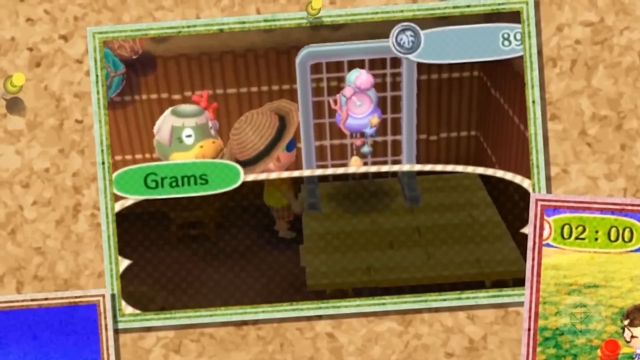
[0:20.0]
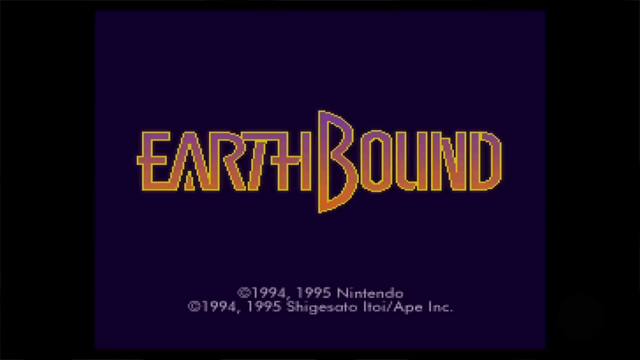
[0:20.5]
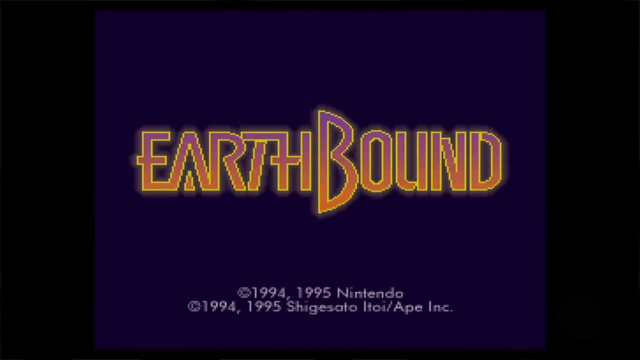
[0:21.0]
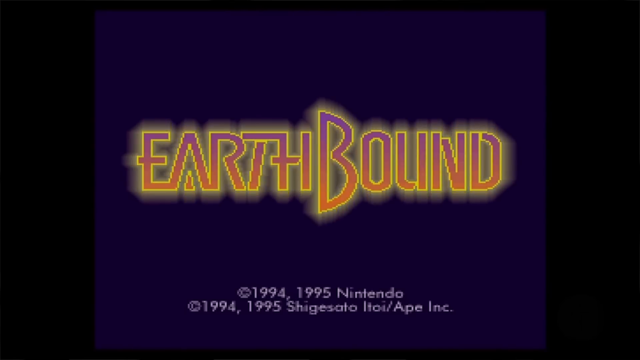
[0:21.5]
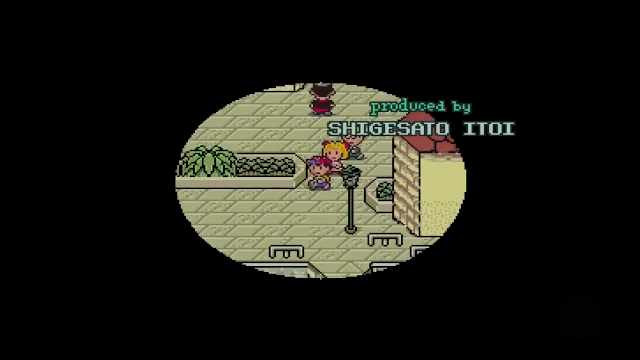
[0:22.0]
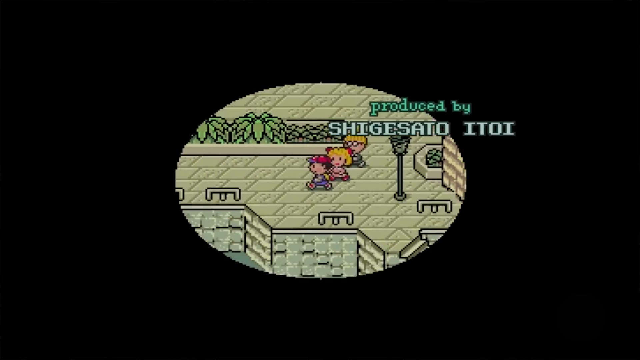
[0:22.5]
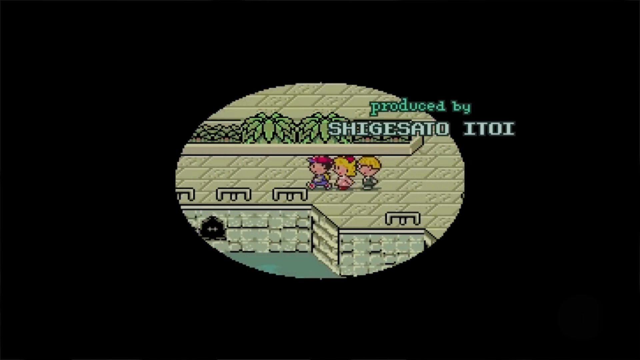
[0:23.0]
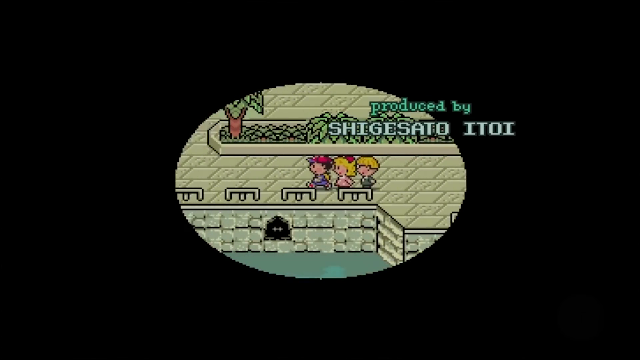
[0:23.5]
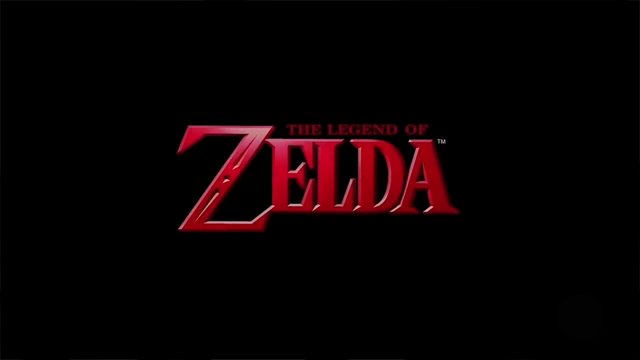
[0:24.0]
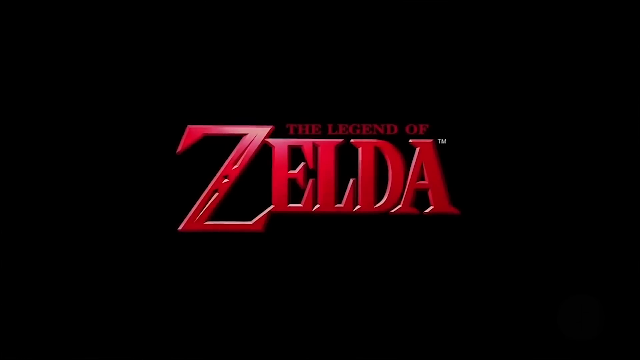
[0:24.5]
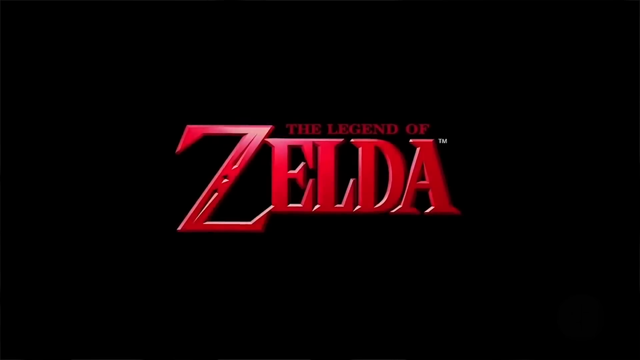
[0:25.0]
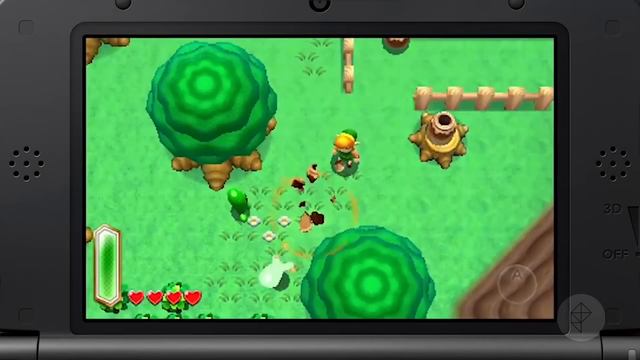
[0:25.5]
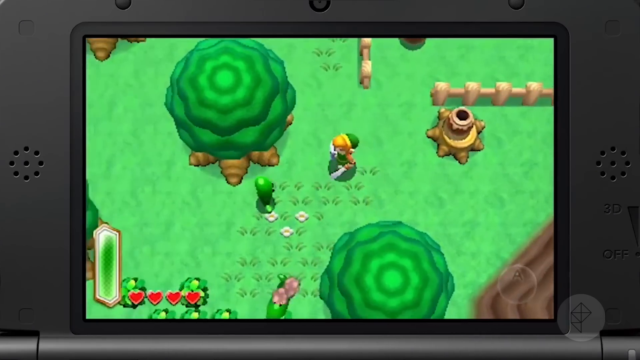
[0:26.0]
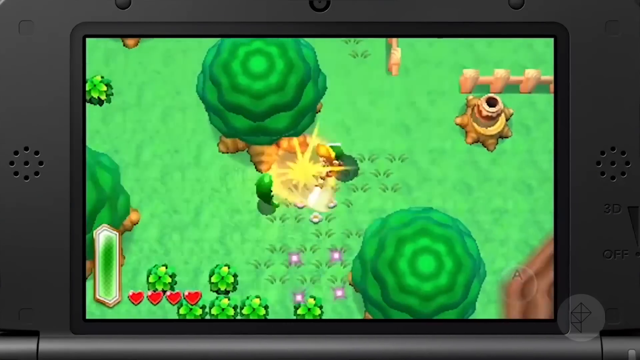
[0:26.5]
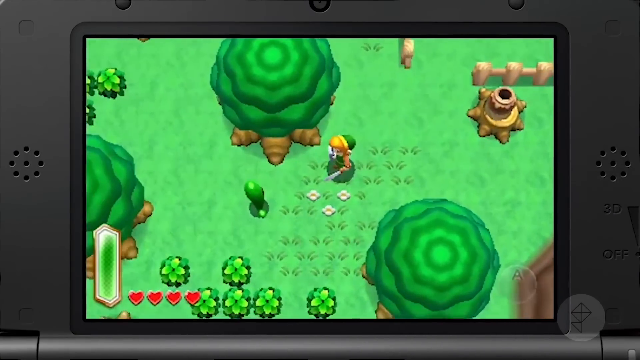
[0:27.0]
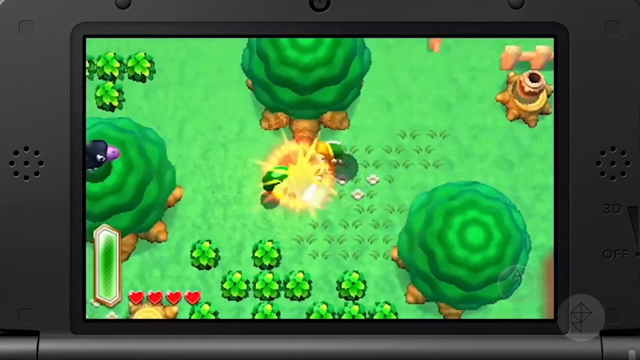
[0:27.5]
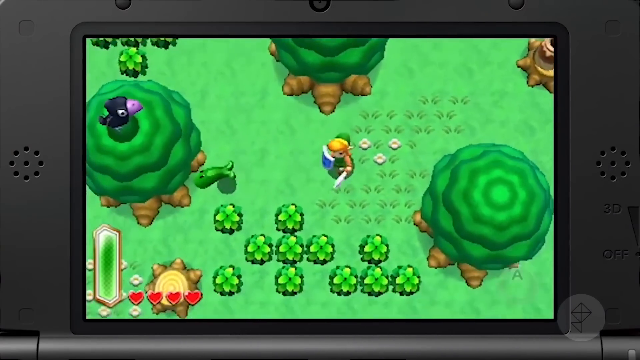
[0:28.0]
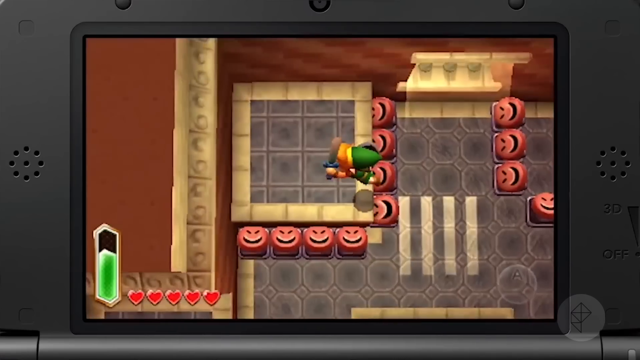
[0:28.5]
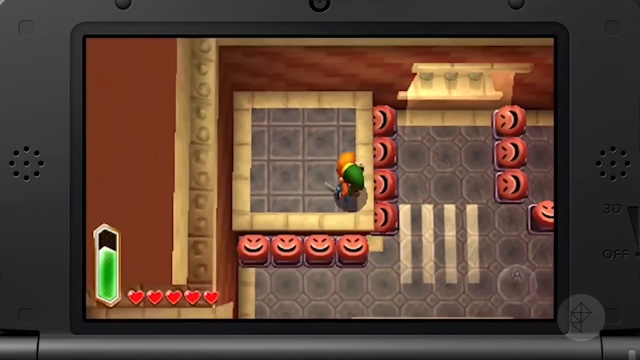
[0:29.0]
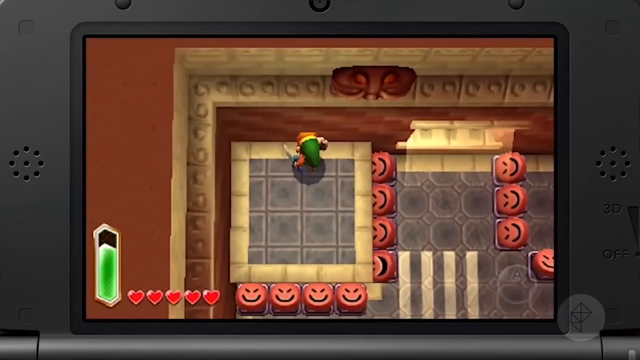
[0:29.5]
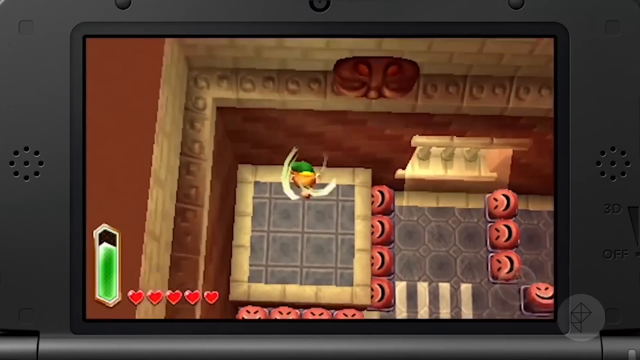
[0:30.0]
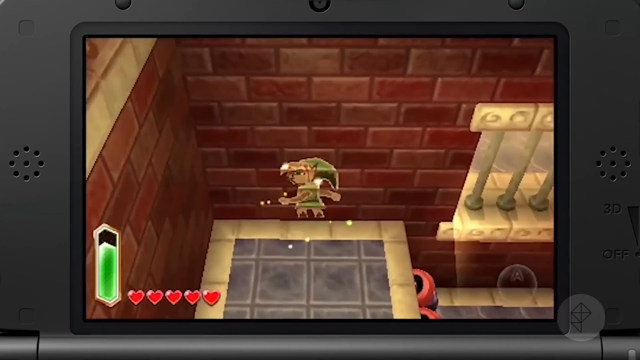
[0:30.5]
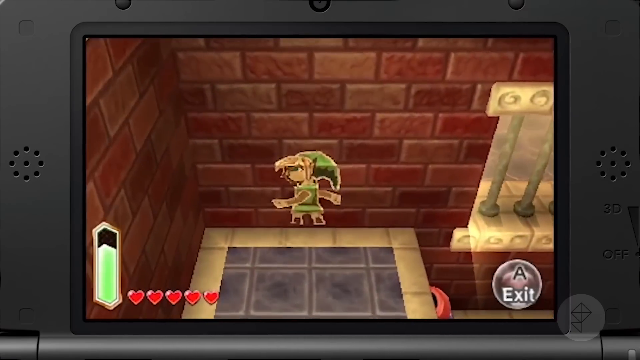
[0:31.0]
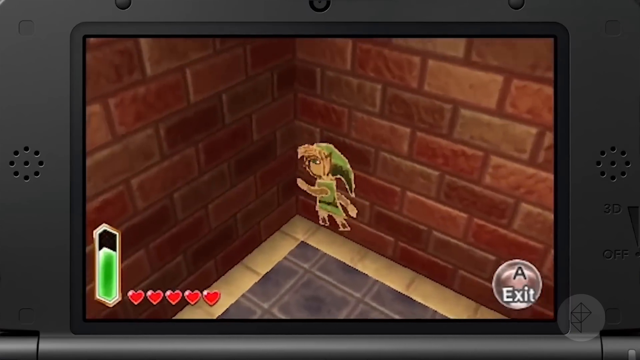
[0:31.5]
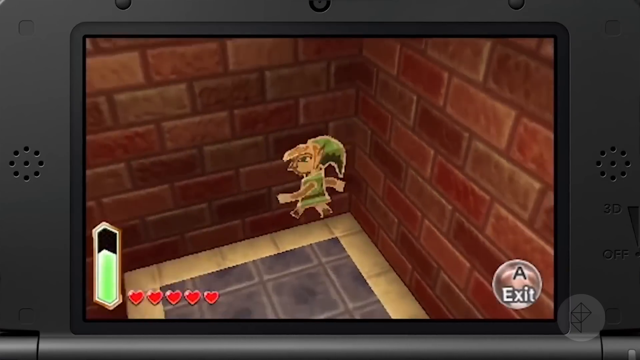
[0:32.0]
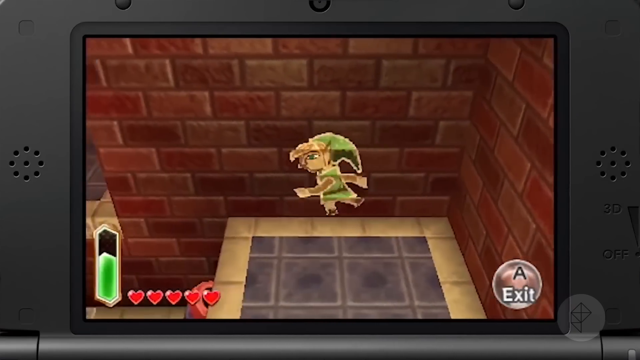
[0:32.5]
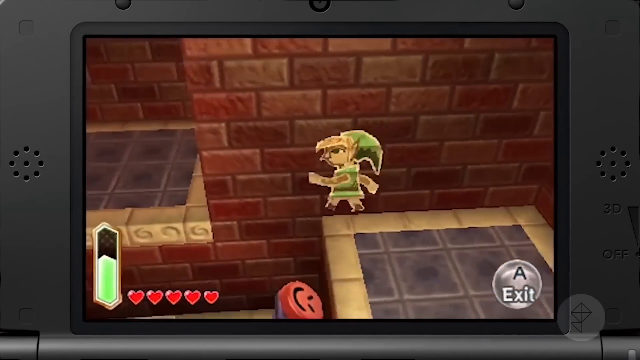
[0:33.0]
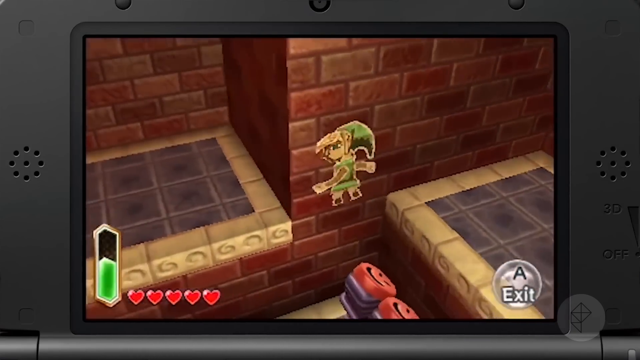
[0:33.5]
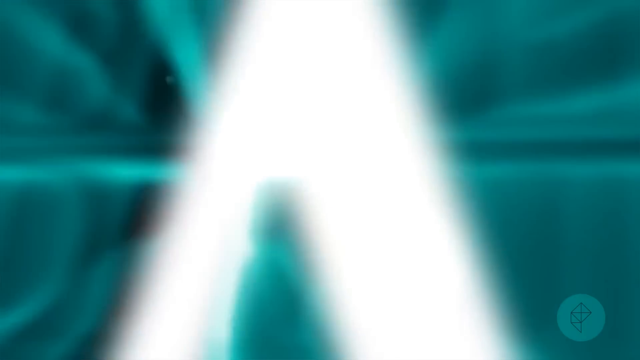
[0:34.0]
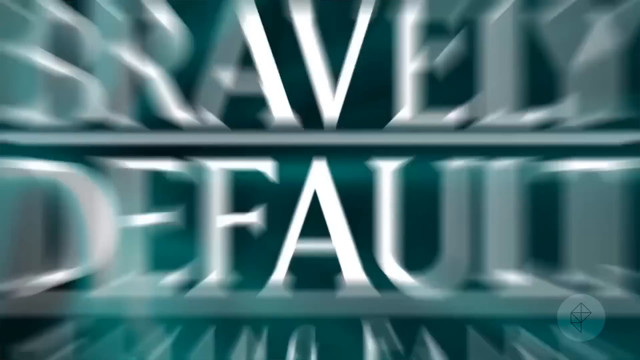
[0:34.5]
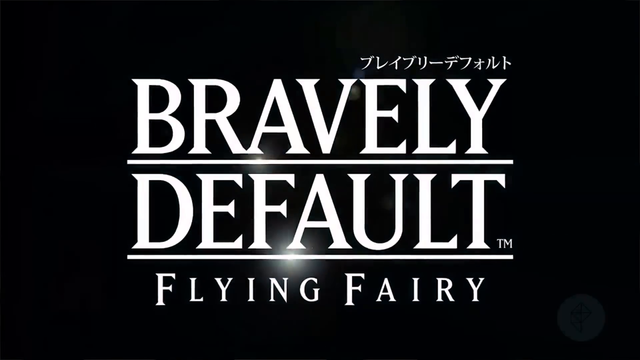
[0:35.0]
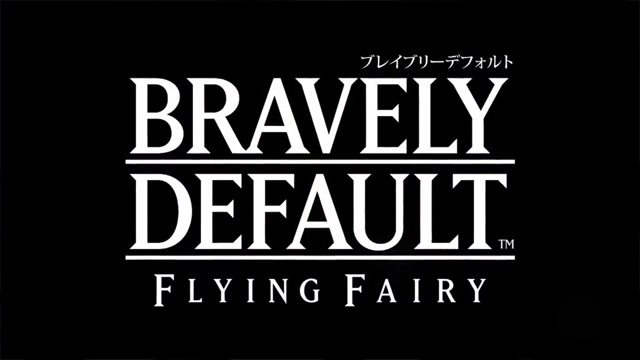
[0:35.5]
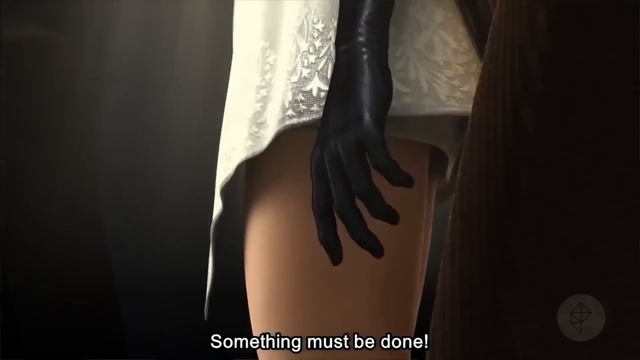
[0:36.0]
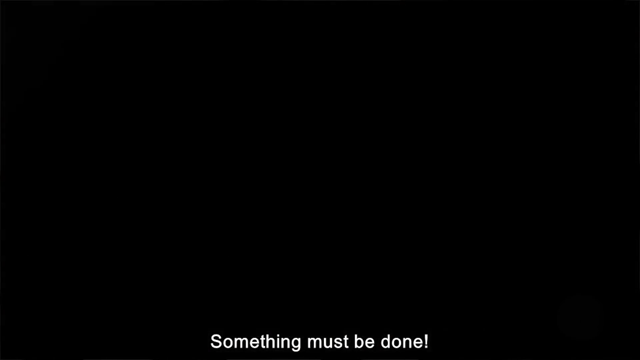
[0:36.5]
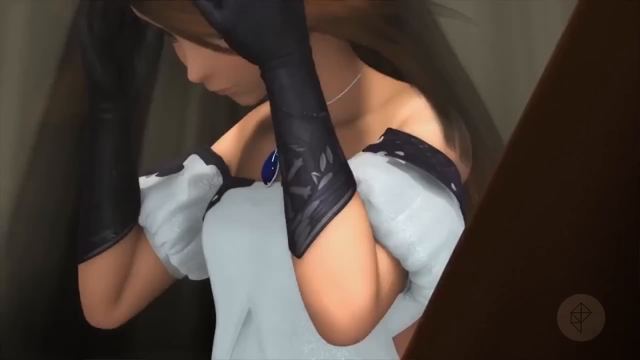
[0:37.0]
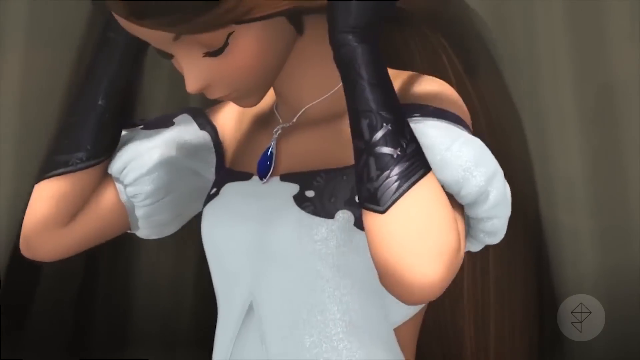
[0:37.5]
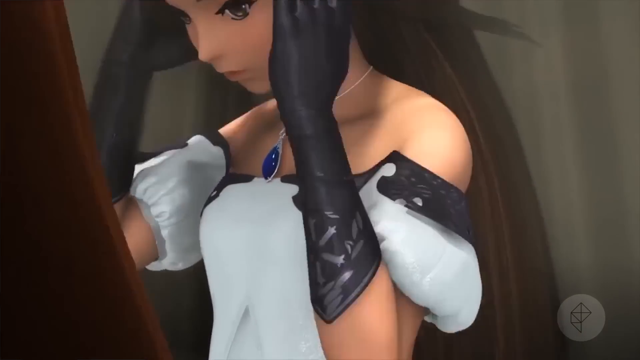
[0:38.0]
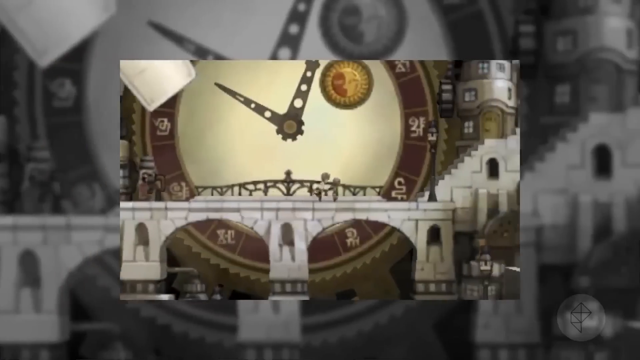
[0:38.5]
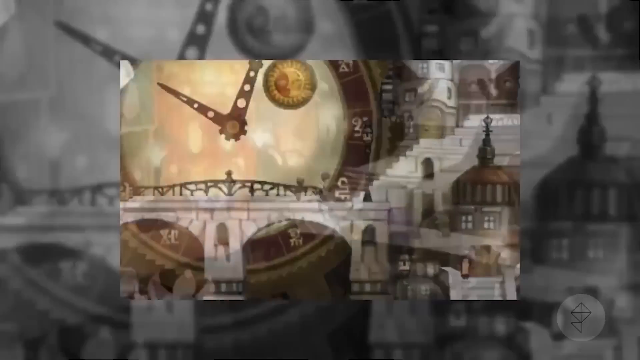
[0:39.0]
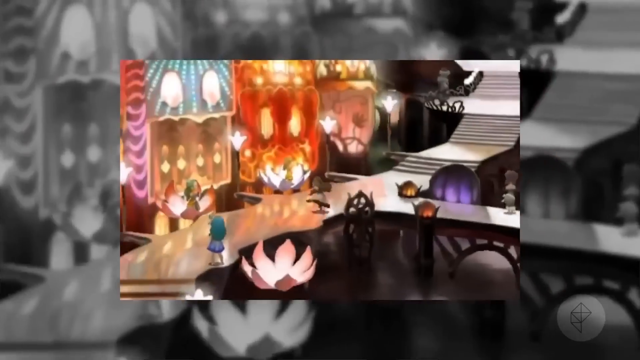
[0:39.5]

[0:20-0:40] The title card of the video game EarthBound appears, a 1990s retro-style game. Sprites of three EarthBound characters, a boy in a red hat, a girl with blonde hair, and a boy with blonde hair and glasses, walk through what looks to be a city. A title card for The Legend of Zelda follows, all in red with heavily stylized text. Gameplay shows Link in 3D in a forest, slicing at a green blob monster, seen from a top-down view; the HUD shows four hearts and a green bar. More gameplay shows Link in some sort of dungeon or cave, where he blends into the wall, becoming two-dimensional, and travels along it in 2D. A title card for Bravely Default Flying Fairy appears in white text, followed by a very anime-looking 3D female in a white dress, then gameplay of 3D-looking characters running around in some sort of factory.